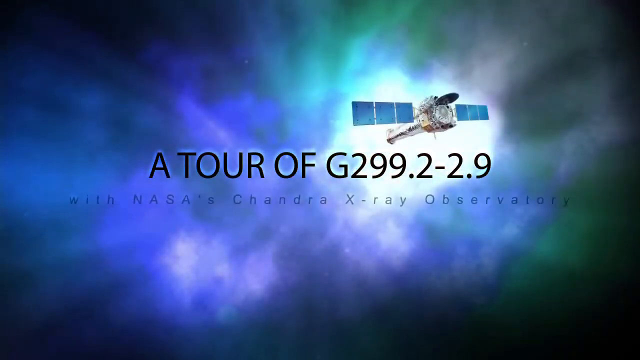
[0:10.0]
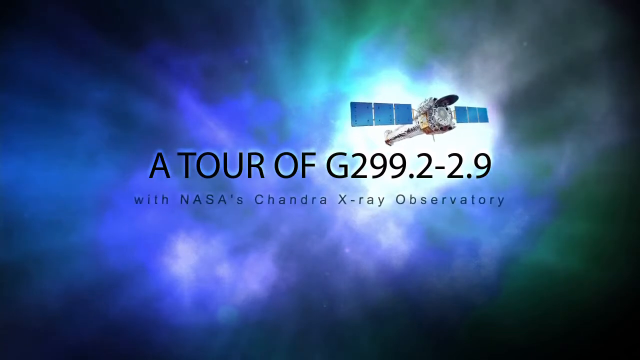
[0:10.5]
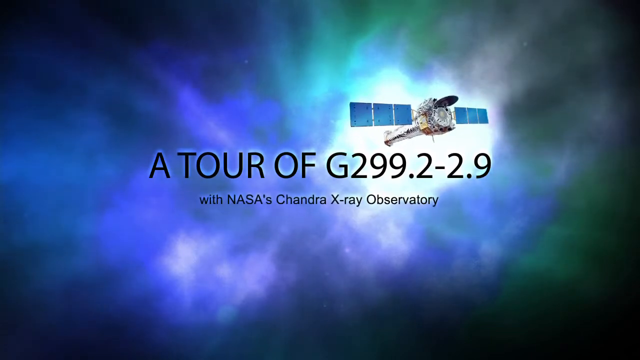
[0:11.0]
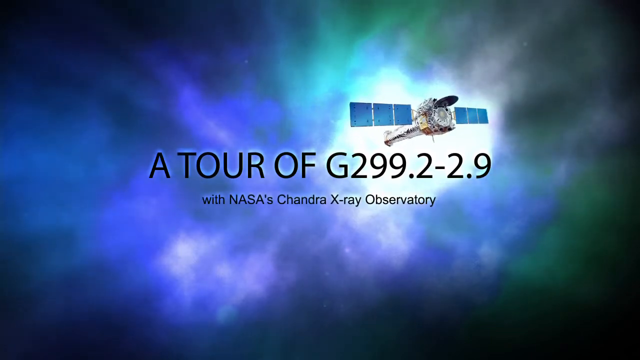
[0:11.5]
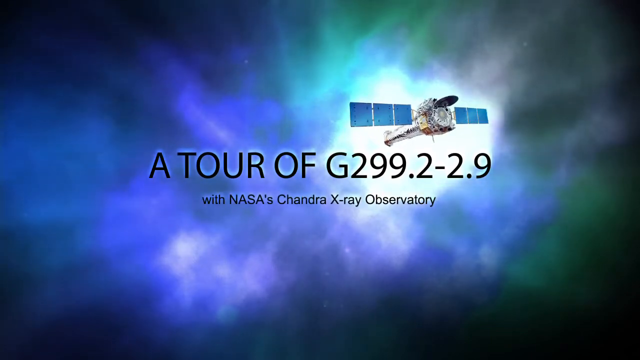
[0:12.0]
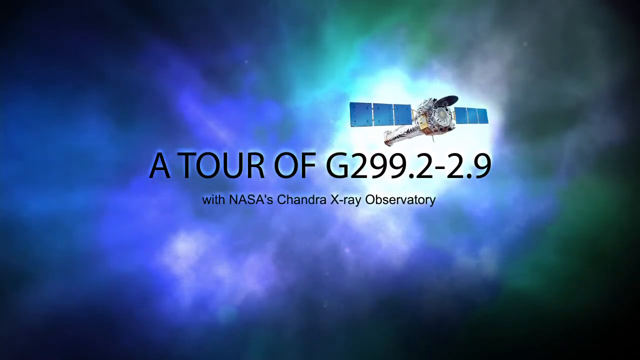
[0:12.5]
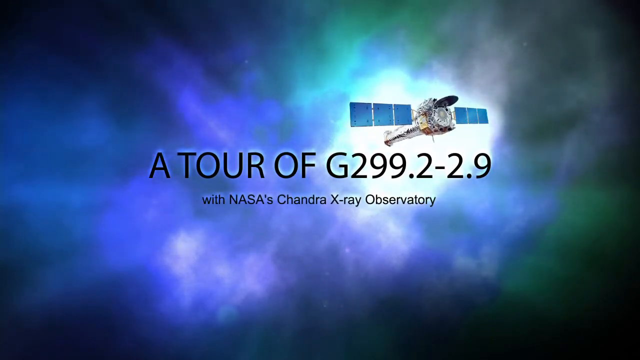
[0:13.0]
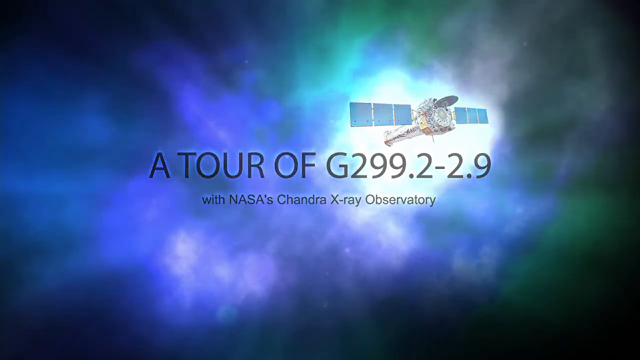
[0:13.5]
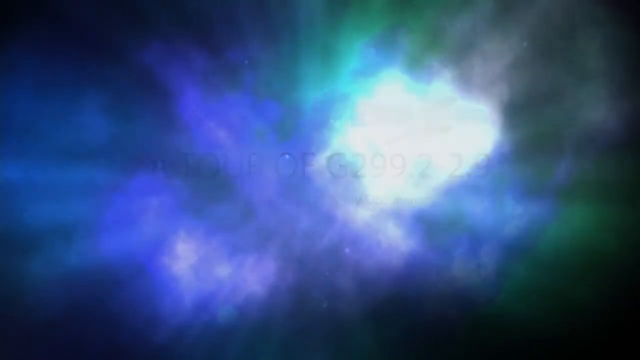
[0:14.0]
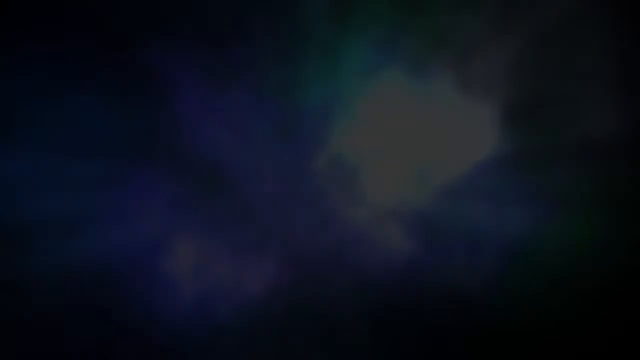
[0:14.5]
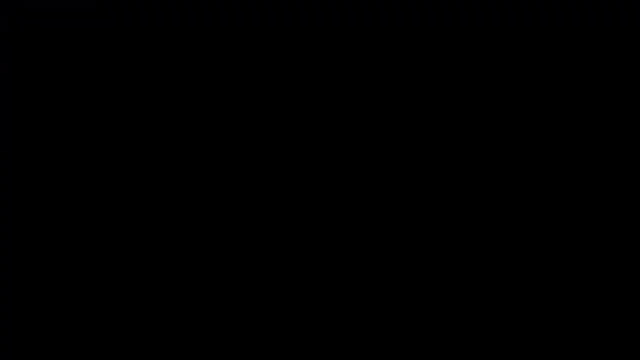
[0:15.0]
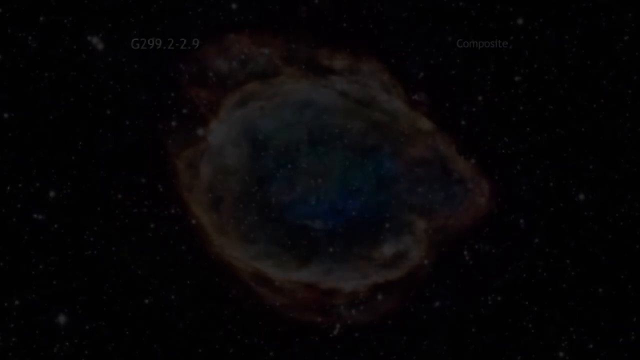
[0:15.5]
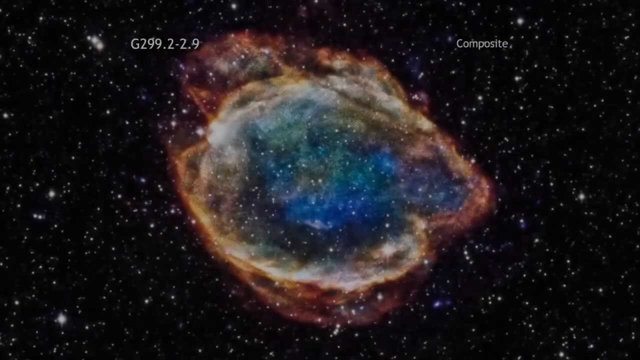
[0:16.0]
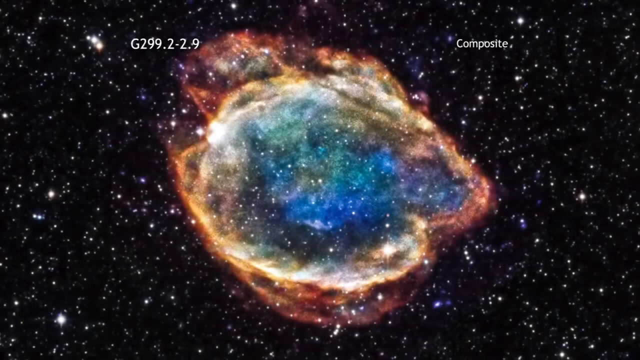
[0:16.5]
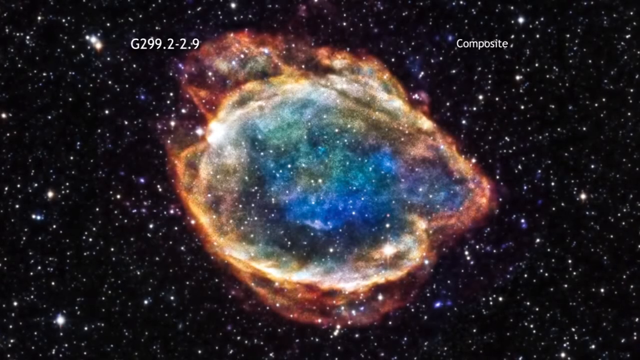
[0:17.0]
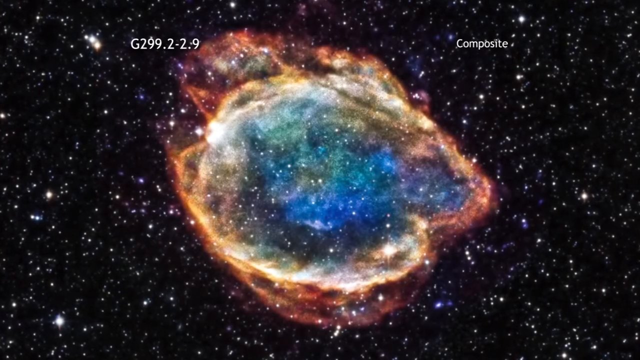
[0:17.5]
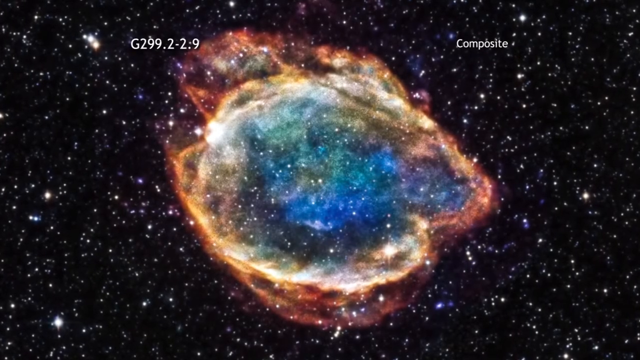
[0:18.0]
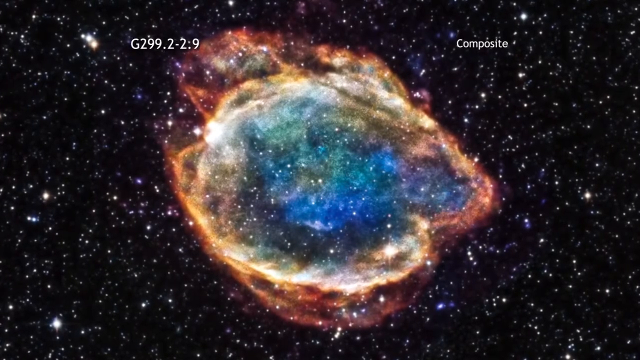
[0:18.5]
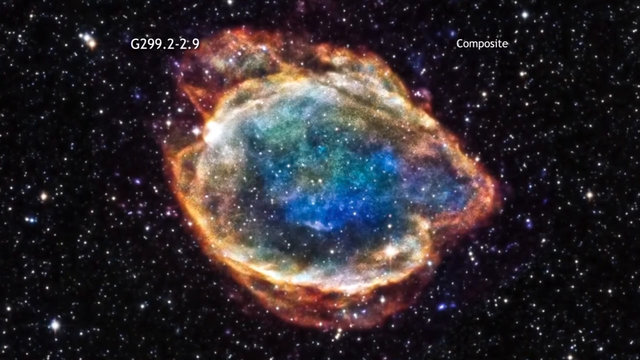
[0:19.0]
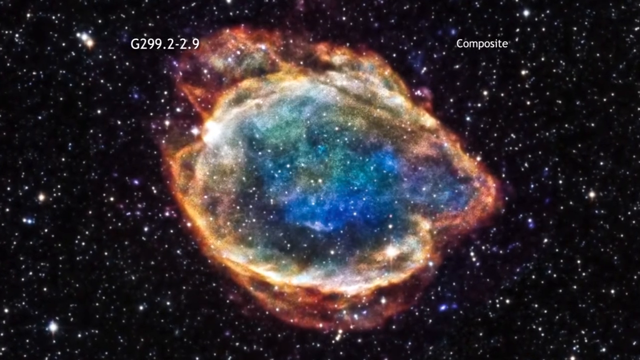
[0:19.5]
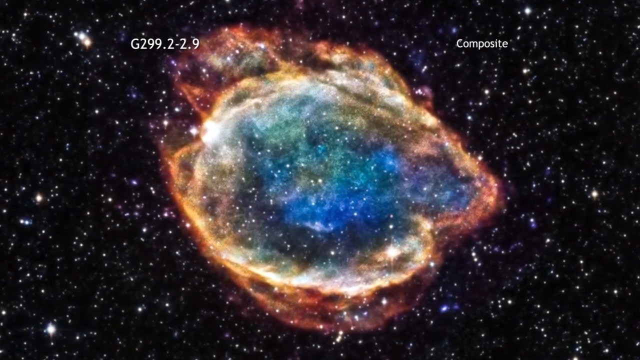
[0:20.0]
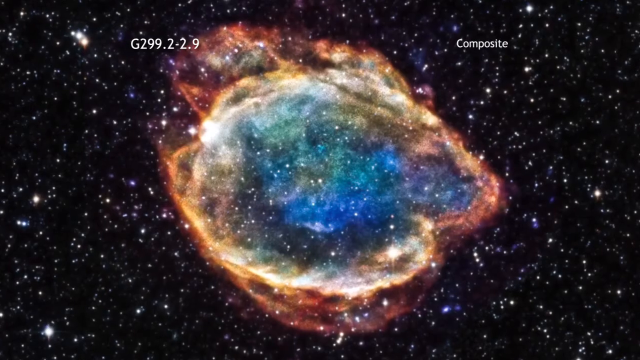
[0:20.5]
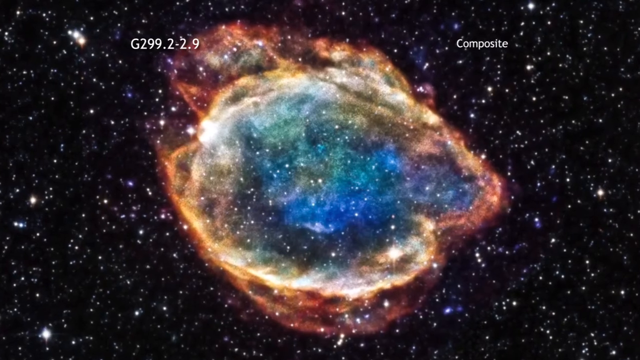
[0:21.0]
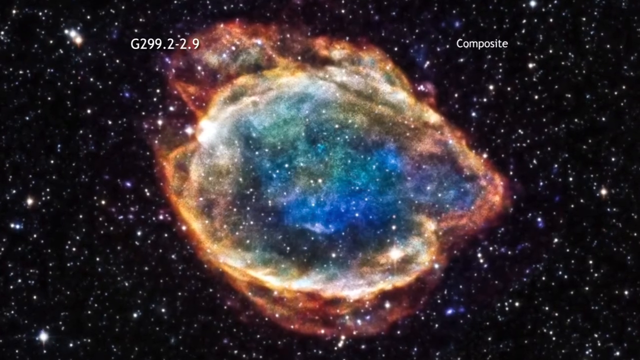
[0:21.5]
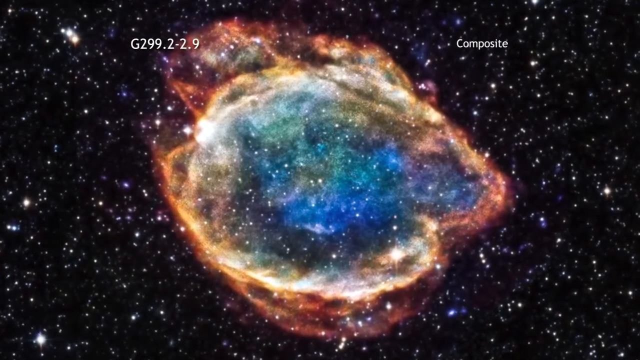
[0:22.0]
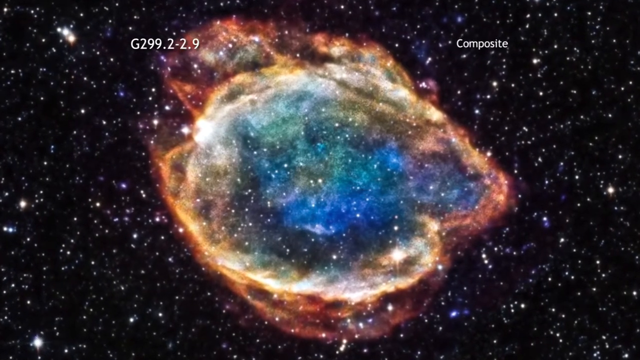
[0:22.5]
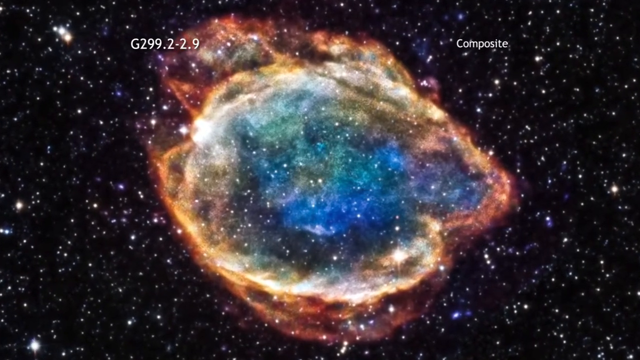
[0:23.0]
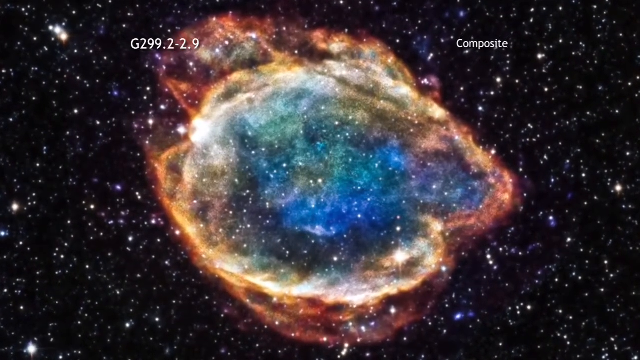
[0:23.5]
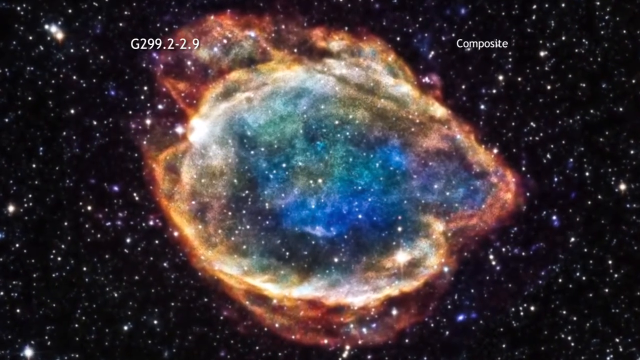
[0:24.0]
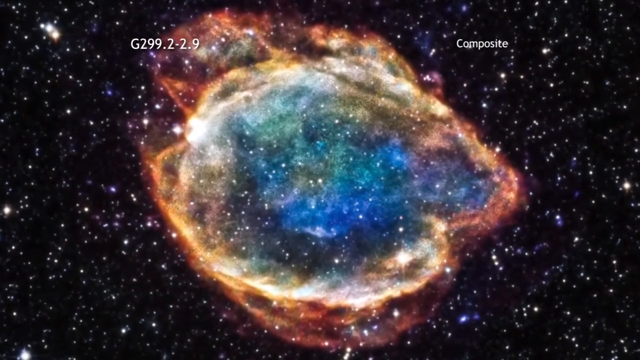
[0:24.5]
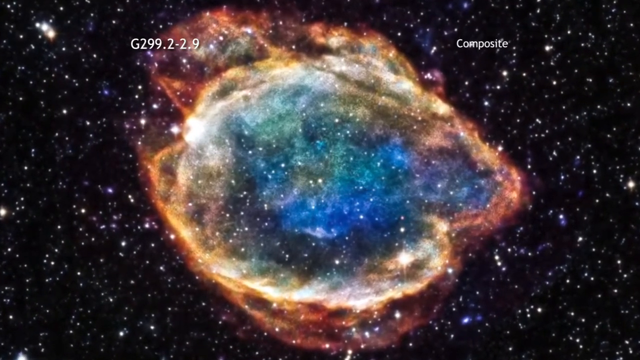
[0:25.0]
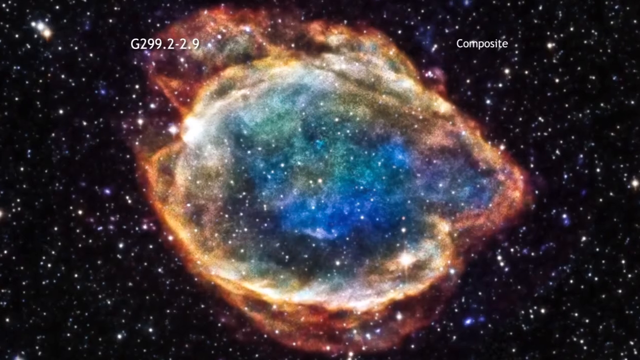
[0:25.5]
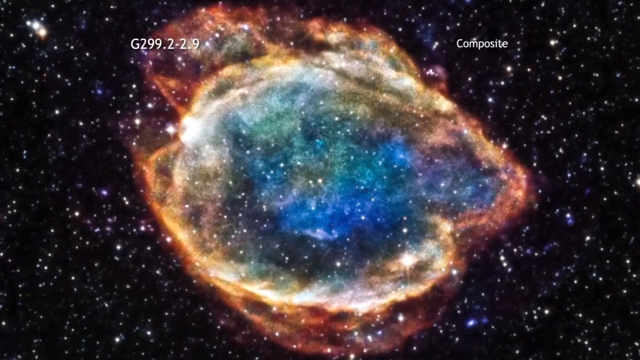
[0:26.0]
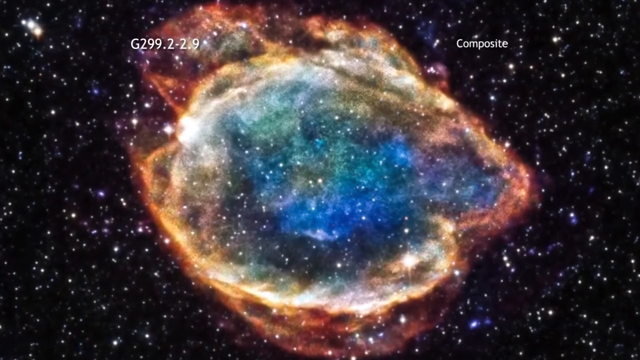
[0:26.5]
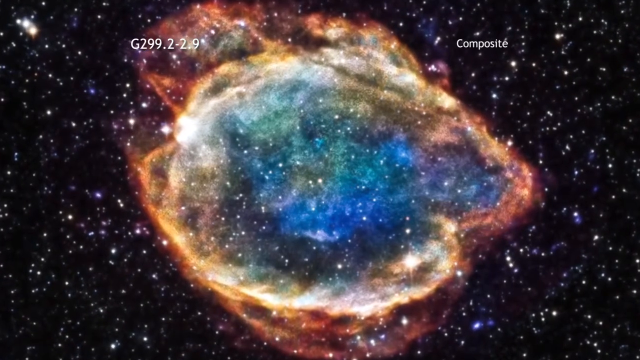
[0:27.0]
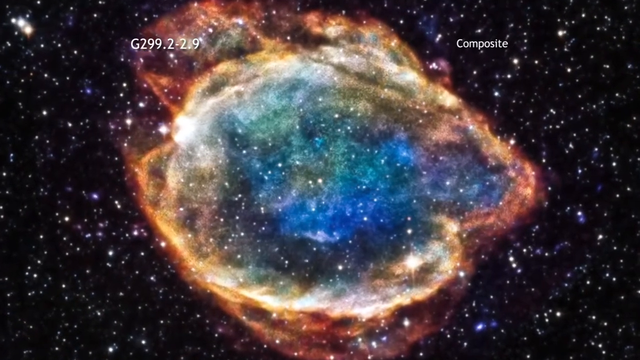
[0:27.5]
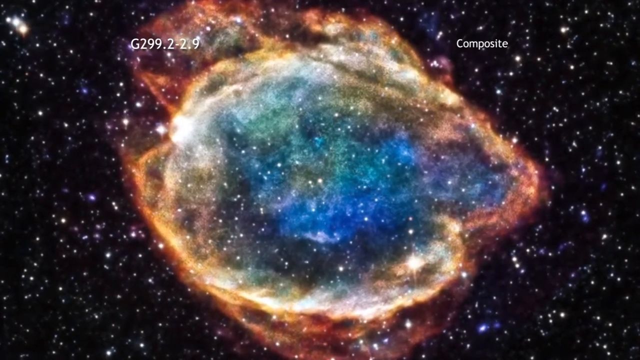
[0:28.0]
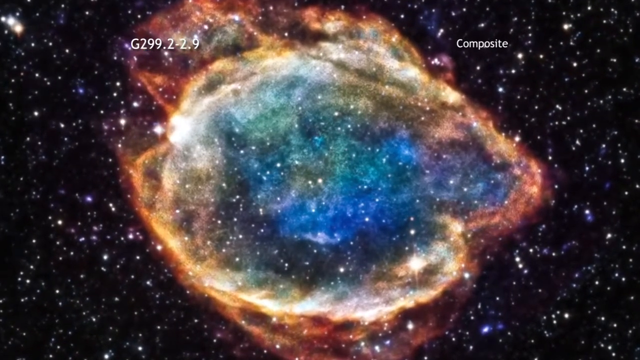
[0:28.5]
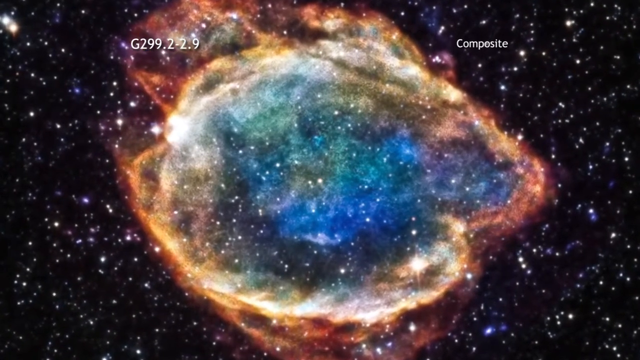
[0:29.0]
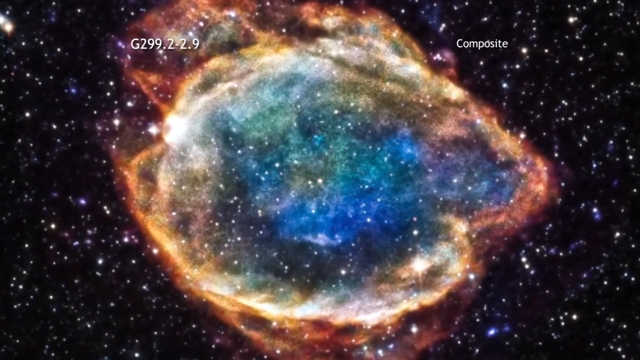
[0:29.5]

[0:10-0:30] Blue, green and white colors are on a black background, with the satellite toward the right. Below it, black text reads "a tour of G299.2-2.9", and below that blue text reads "with NASA's Chandra X-ray Observatory". The letters come closer together, turn black and fade away to a black screen. Then a black sky with white stars appears, with a blue and green cloudiness in the center surrounded by yellow, which is surrounded by red. Text in the upper left reads "G299.2-2.9" and on the right side "composite". The view slowly zooms in on the cloud mass in the center. In the upper left area, two very bright stars next to each other are larger than the others. In the center left there is another large star that is brighter than the others, and in the center right there is also a star that is bigger and brighter than the others. At least five blue stars are scattered among the white stars, in many different sizes and brightnesses.